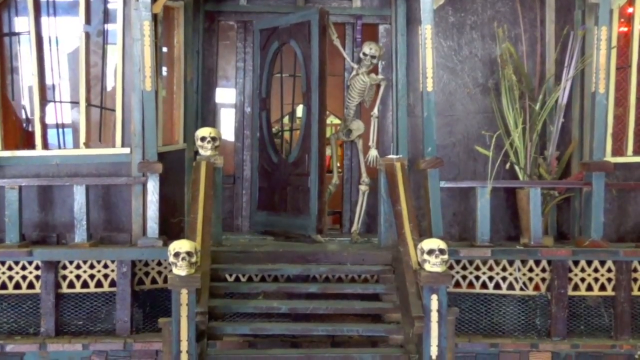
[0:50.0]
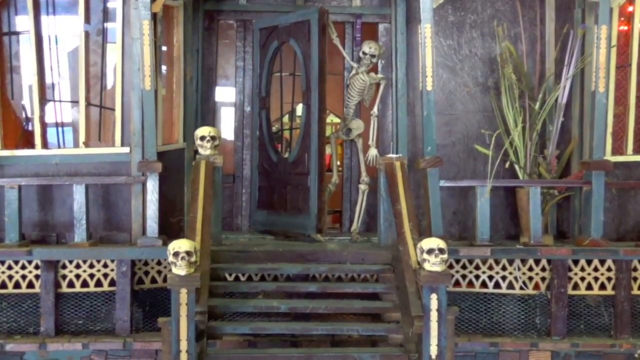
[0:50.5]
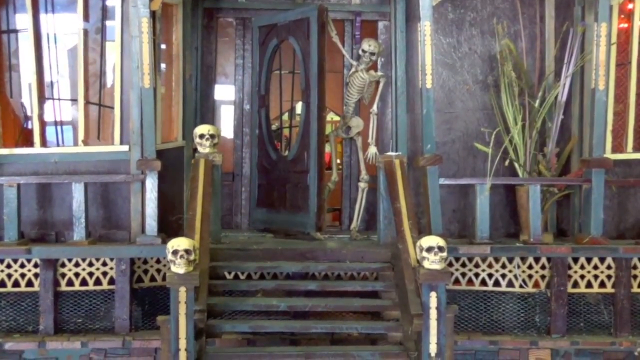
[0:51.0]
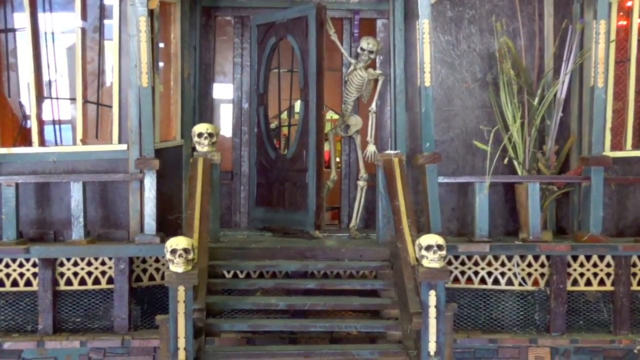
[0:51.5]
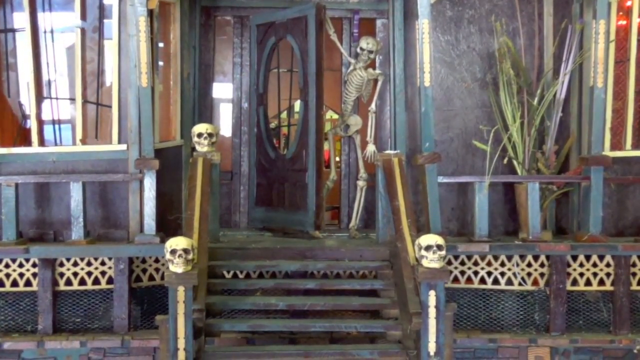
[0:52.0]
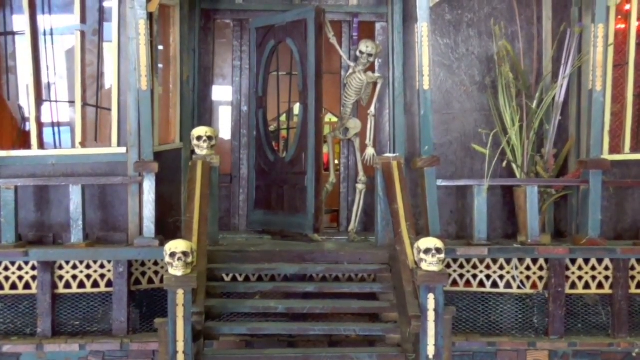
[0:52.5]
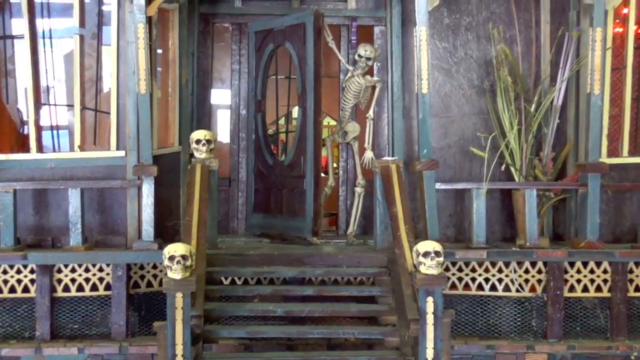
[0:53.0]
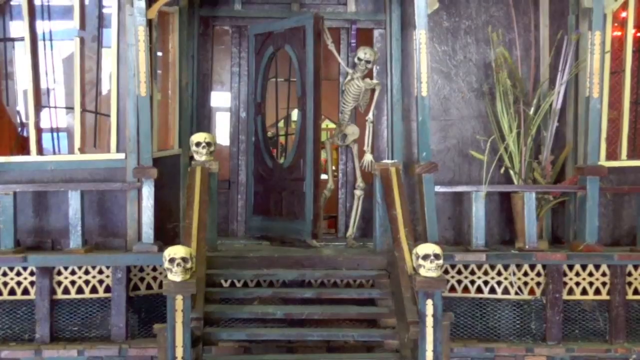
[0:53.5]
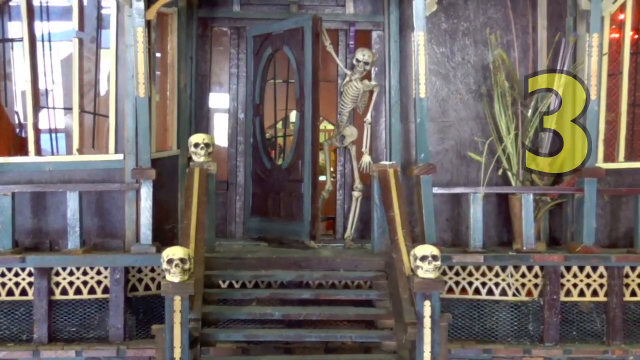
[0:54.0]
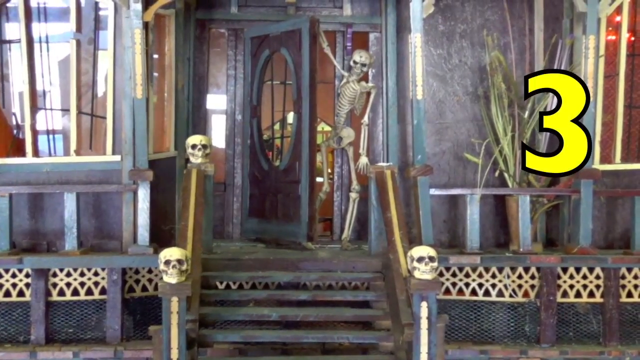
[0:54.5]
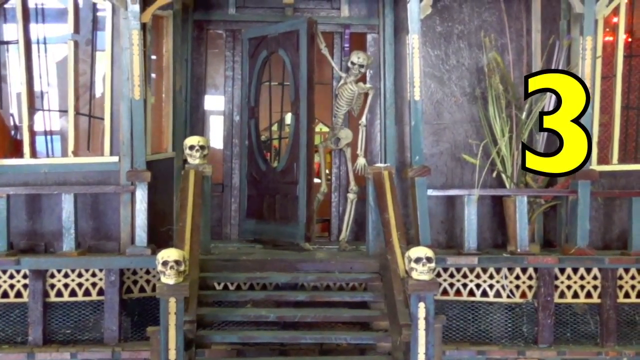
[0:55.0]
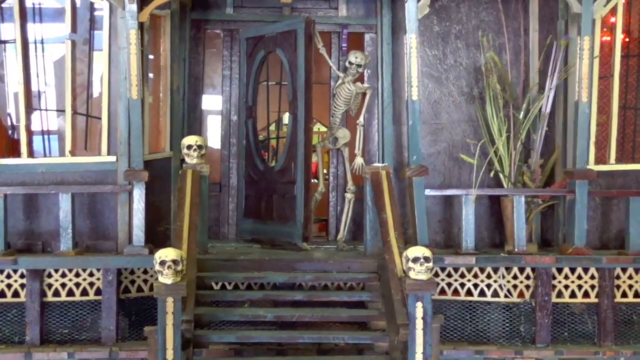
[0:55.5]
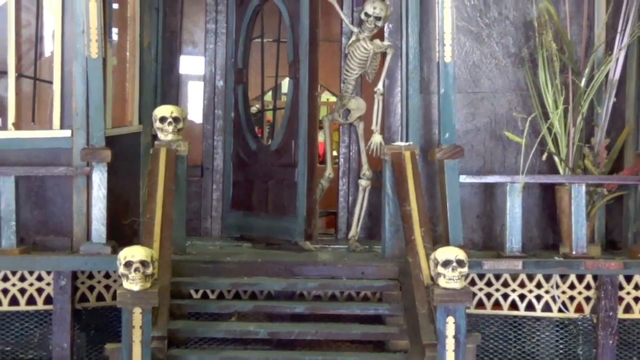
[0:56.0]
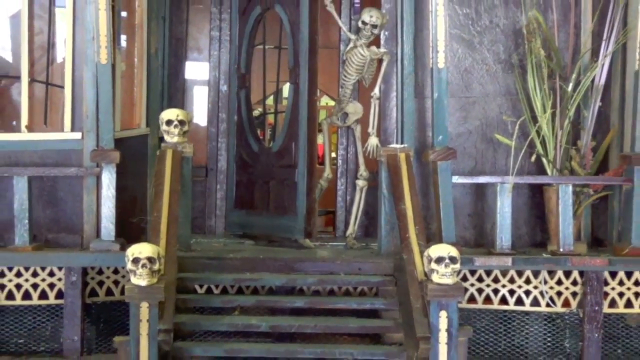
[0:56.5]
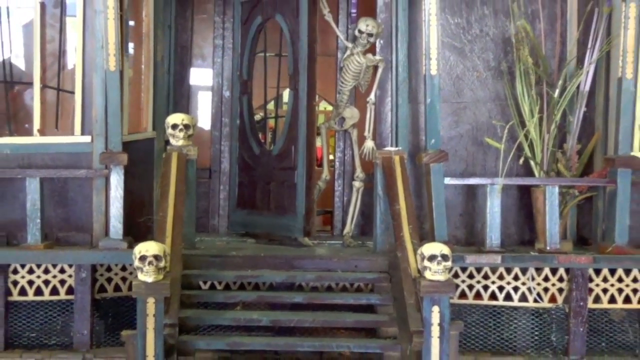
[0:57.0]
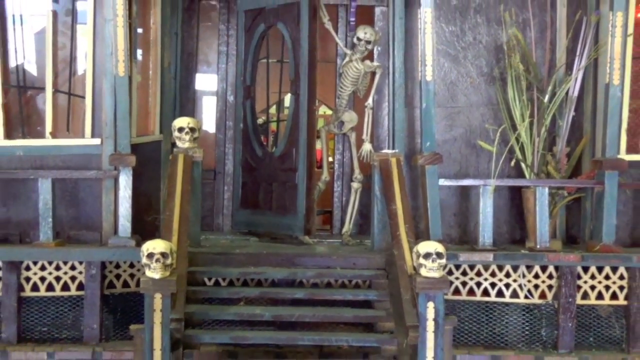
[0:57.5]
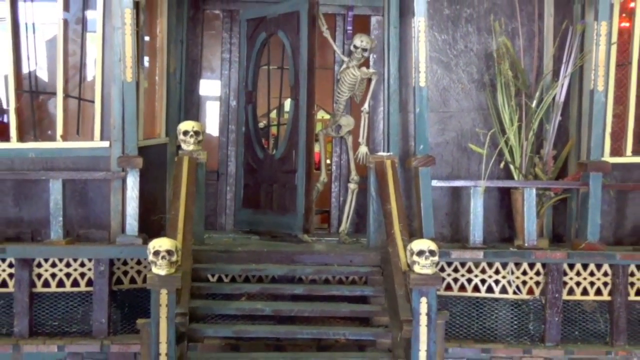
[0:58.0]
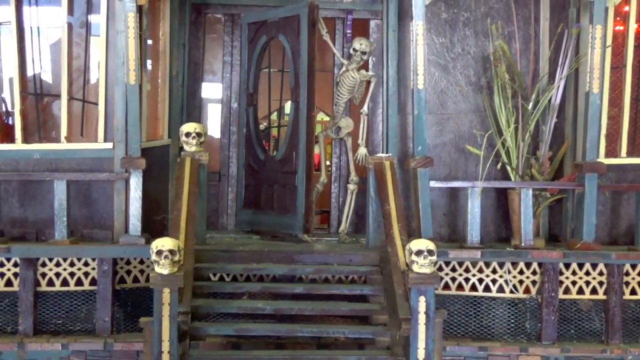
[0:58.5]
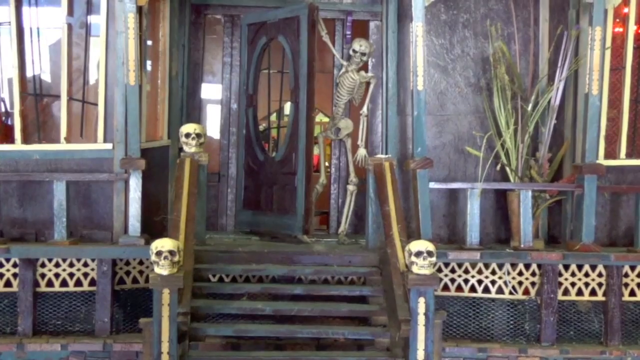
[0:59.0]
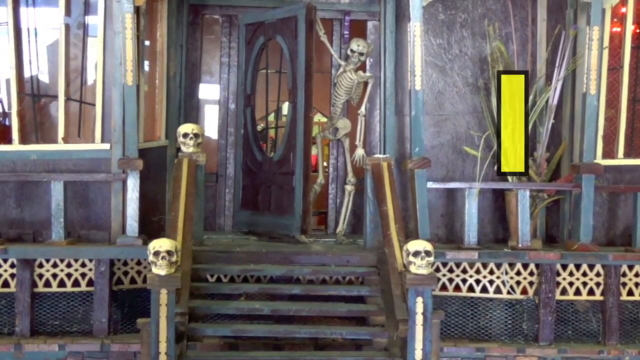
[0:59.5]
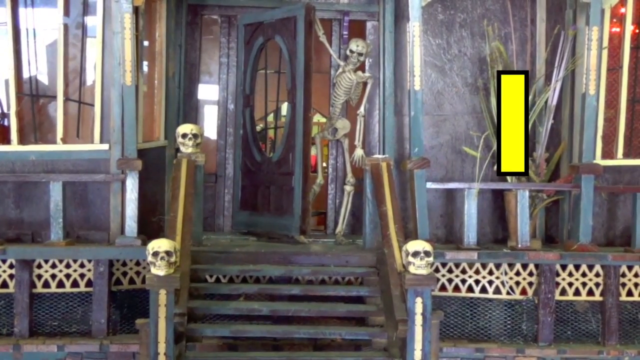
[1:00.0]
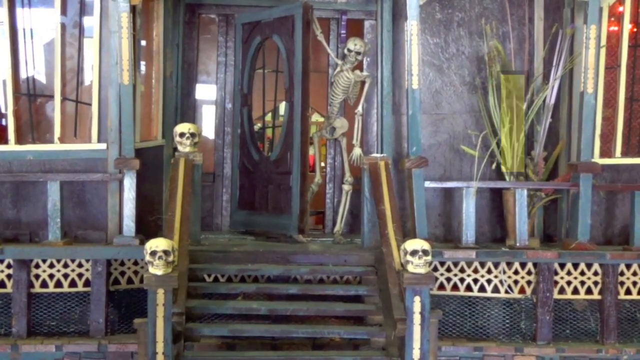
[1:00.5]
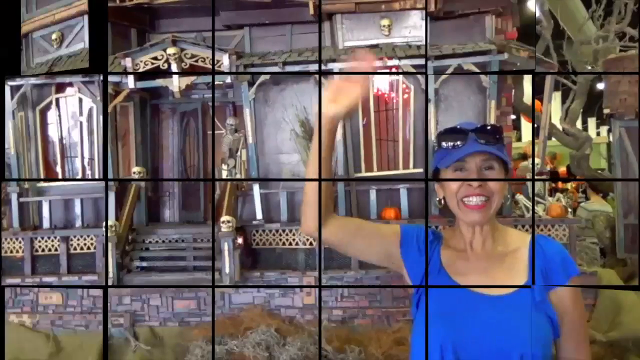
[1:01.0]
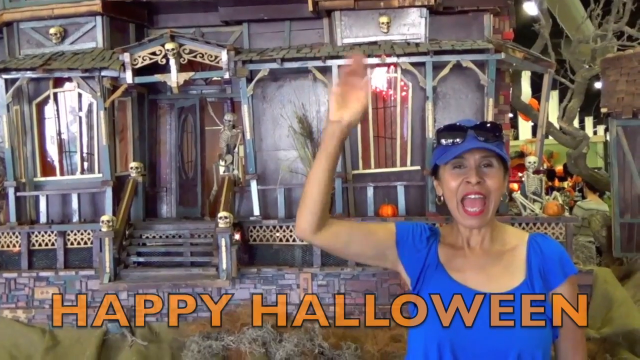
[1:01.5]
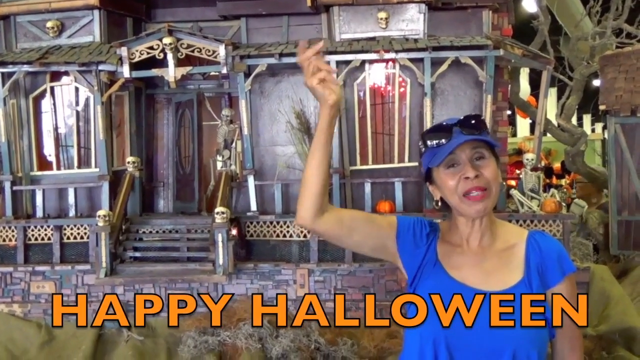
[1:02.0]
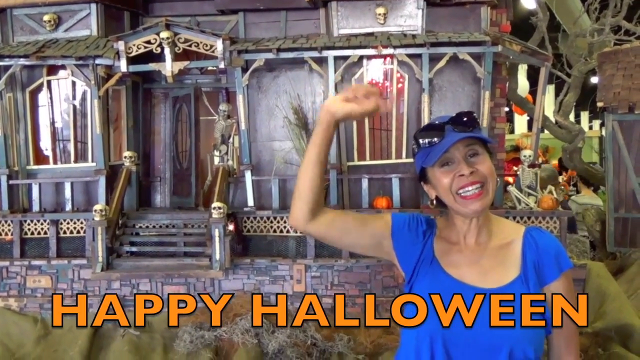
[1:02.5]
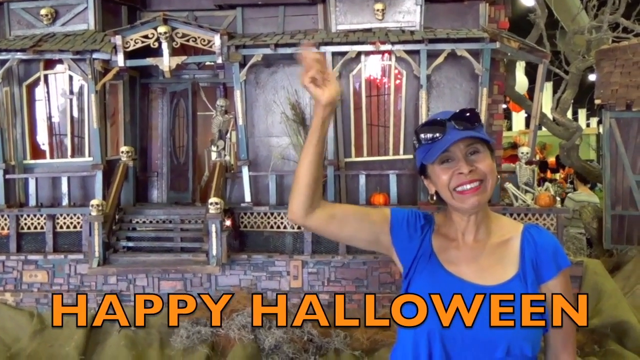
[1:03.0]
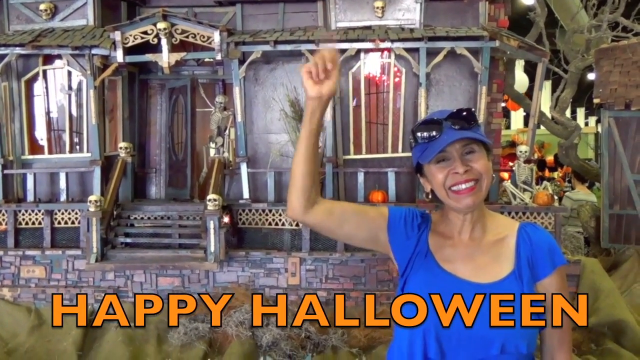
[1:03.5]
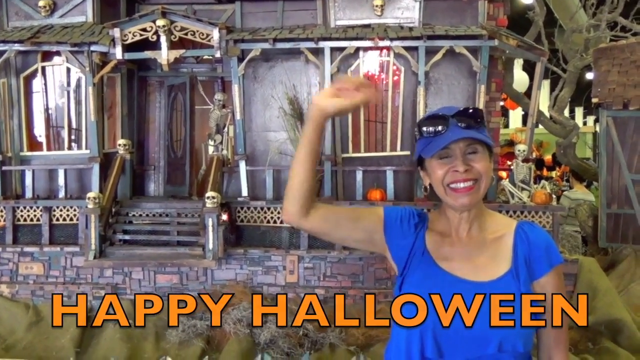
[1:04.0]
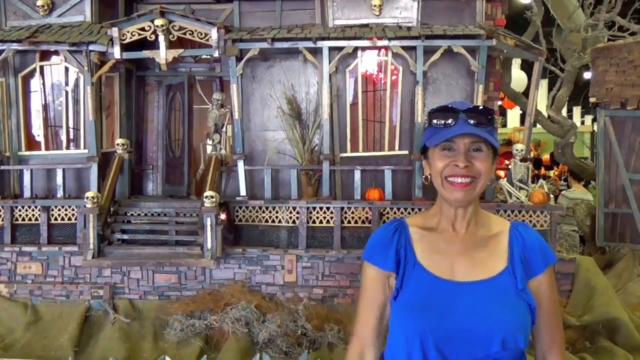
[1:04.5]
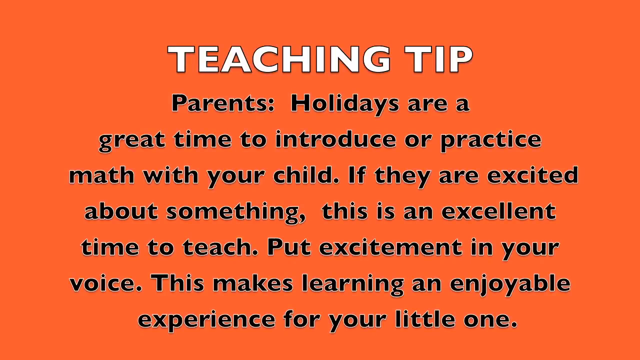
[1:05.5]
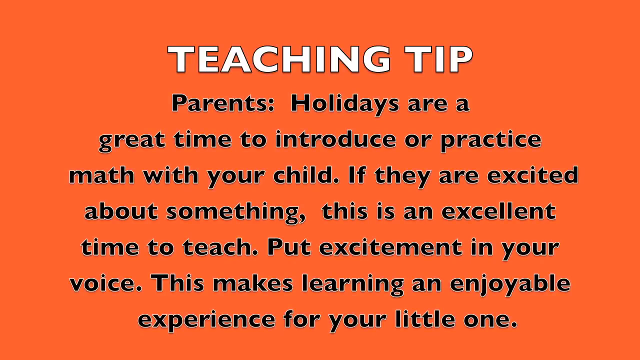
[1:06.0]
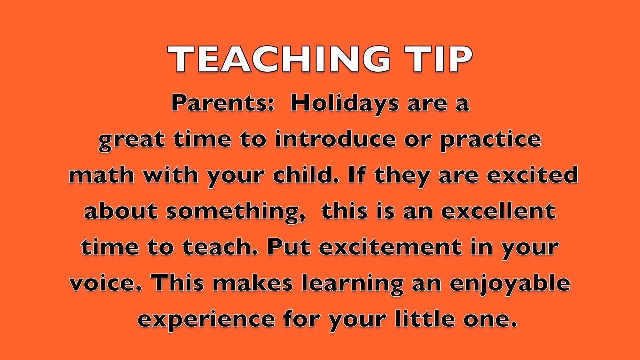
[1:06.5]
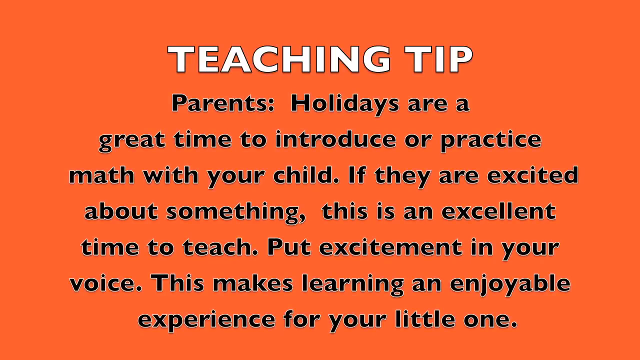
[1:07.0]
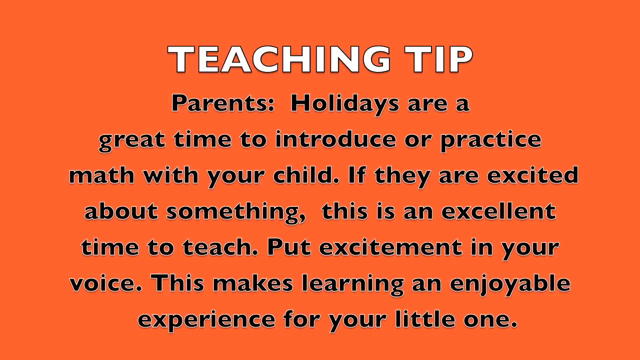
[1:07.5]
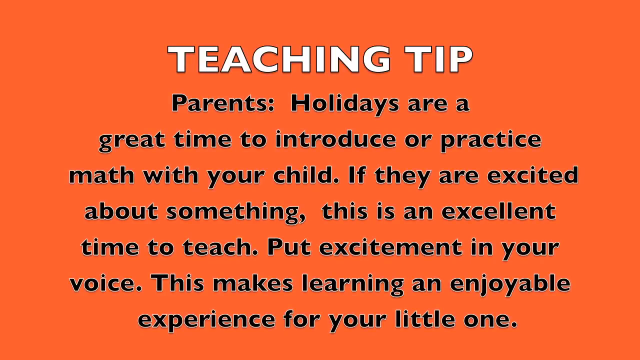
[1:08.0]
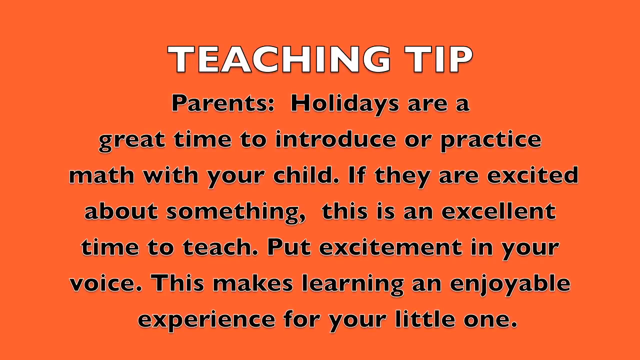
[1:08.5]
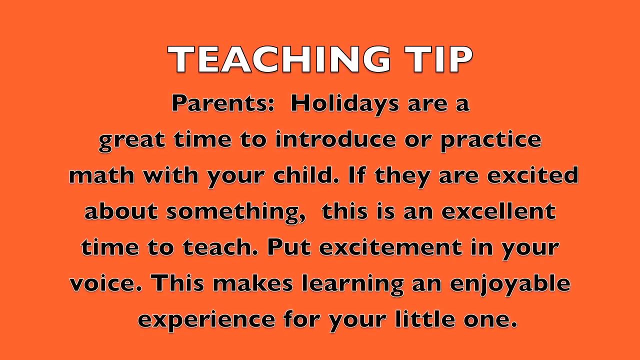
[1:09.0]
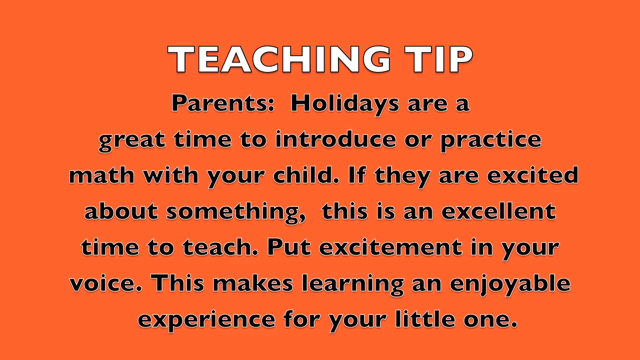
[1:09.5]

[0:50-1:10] The number three appears in yellow text, and the railing going up to the porch has three skulls on it. The woman in the blue blouse then appears, standing off to the right, with the haunted mansion behind her, including the front porch with the three skulls and the skeleton. She has her right arm up in the air, waving, and wears gold hoop earrings. Text at the bottom in all orange capital letters with a black outline reads "Happy Halloween." In the background behind the haunted house, someone's head is briefly glimpsed as they walk by, then it goes away. The screen turns into a grid of orange tiles with black grid lines.